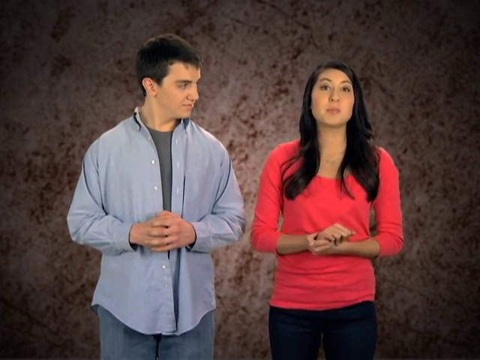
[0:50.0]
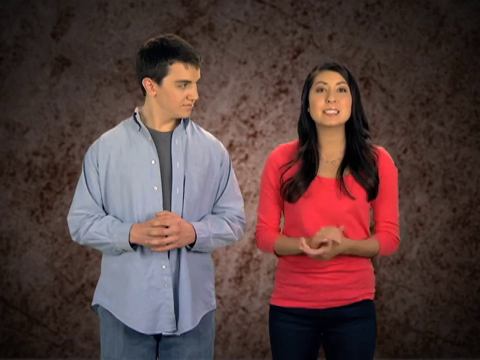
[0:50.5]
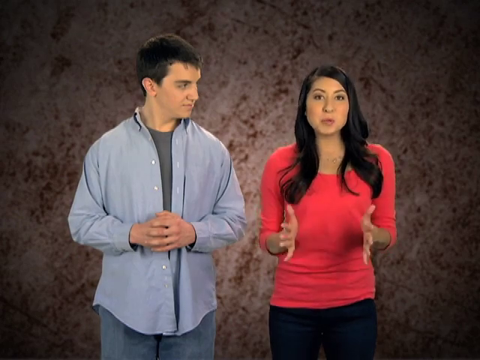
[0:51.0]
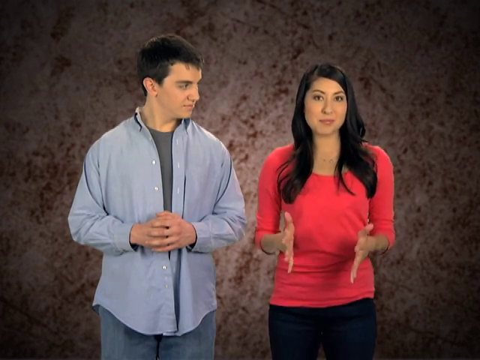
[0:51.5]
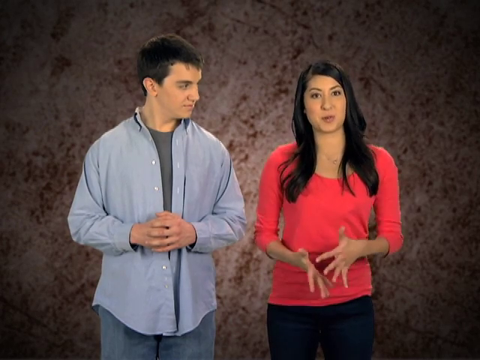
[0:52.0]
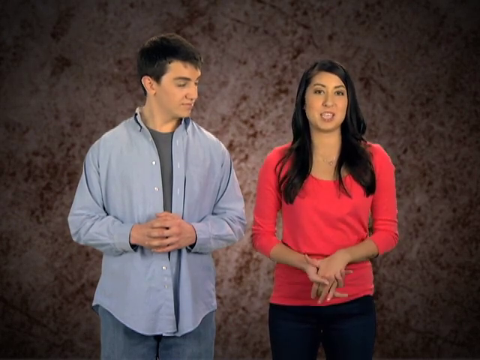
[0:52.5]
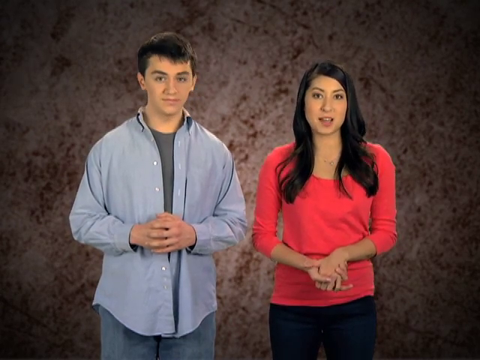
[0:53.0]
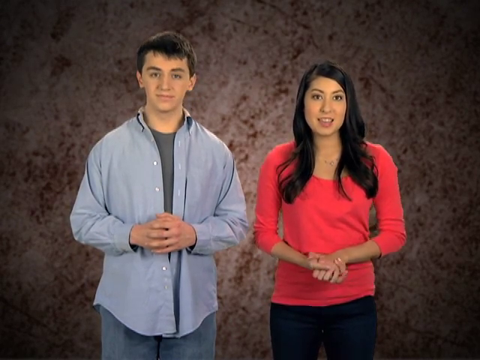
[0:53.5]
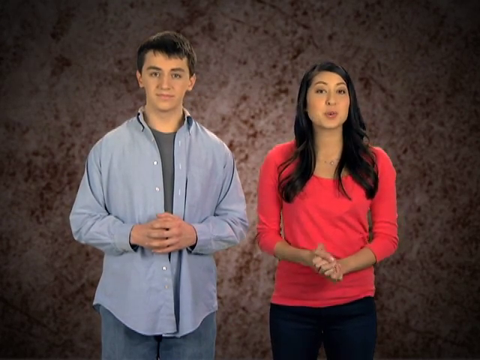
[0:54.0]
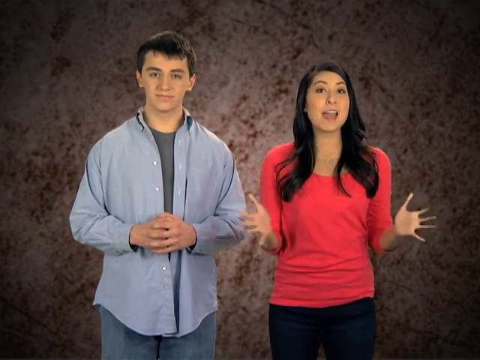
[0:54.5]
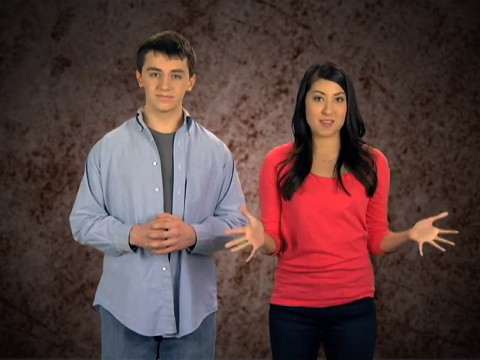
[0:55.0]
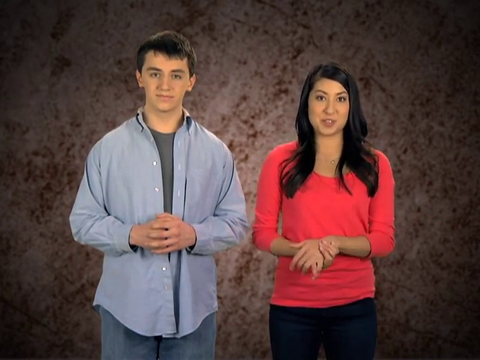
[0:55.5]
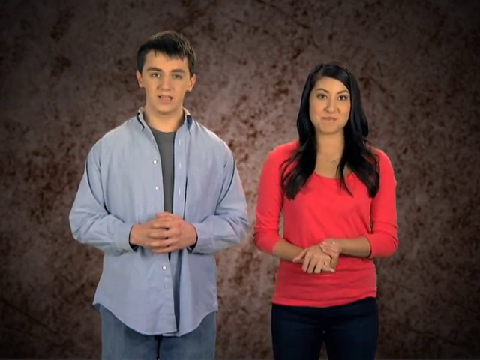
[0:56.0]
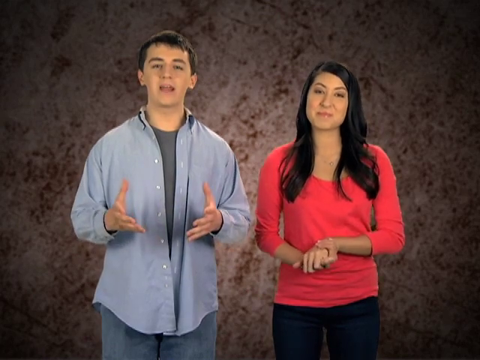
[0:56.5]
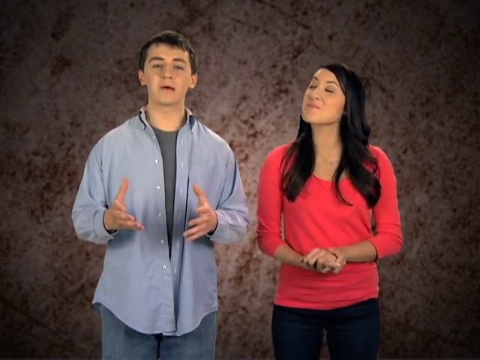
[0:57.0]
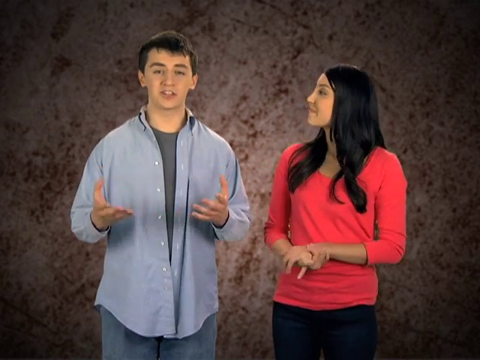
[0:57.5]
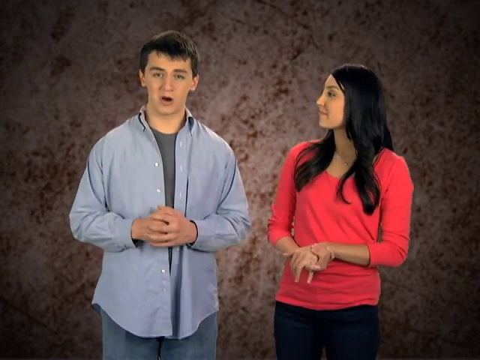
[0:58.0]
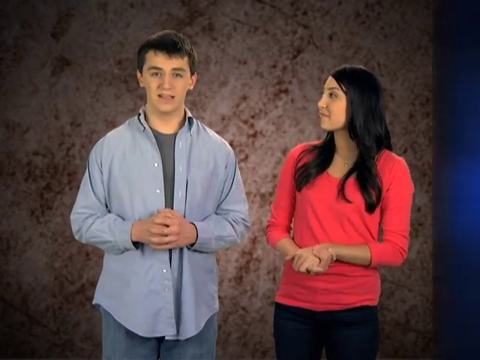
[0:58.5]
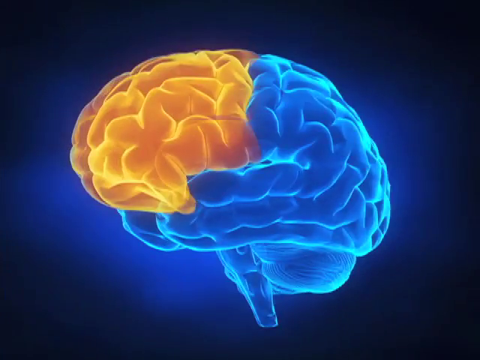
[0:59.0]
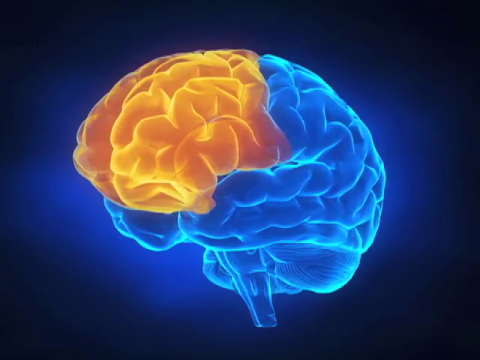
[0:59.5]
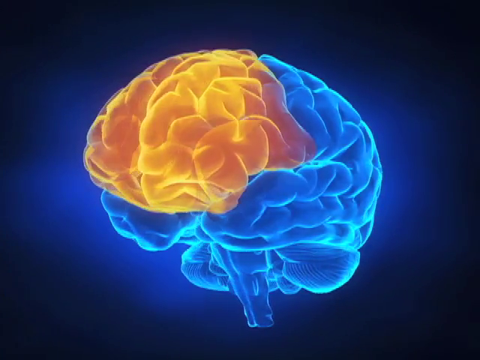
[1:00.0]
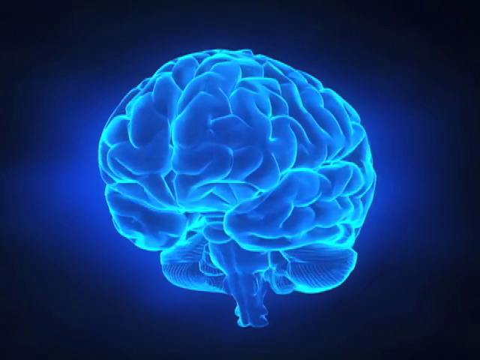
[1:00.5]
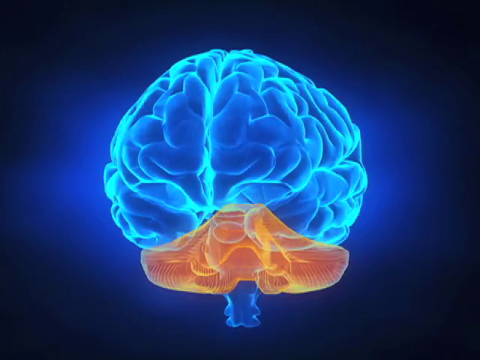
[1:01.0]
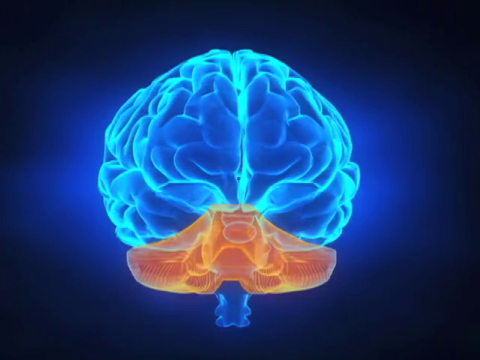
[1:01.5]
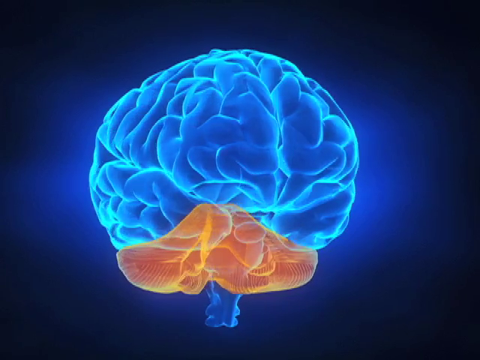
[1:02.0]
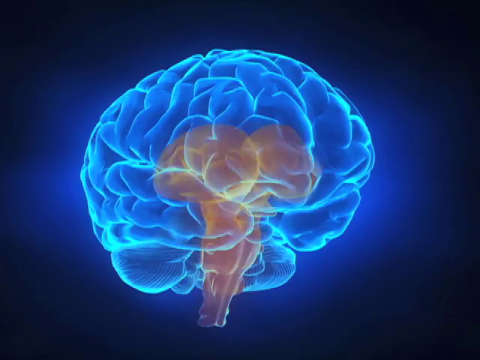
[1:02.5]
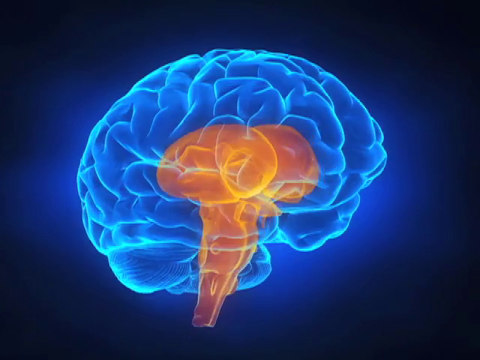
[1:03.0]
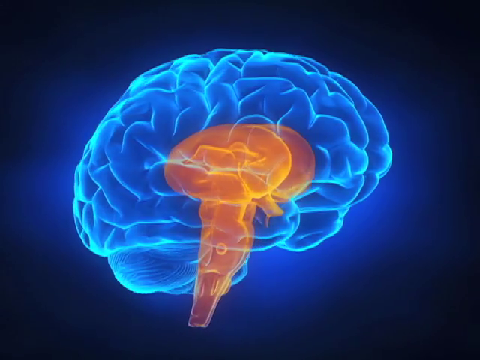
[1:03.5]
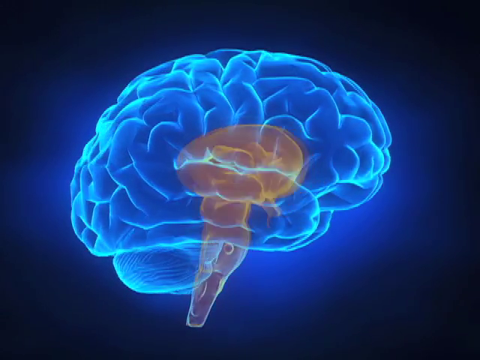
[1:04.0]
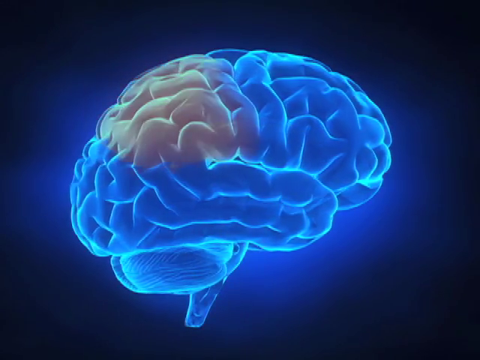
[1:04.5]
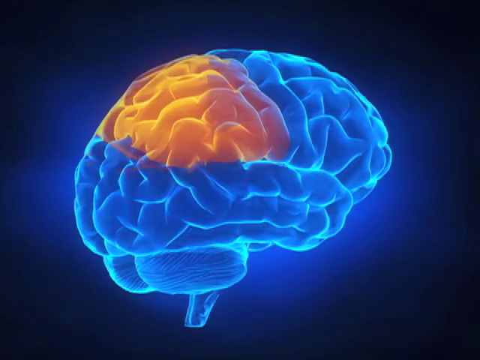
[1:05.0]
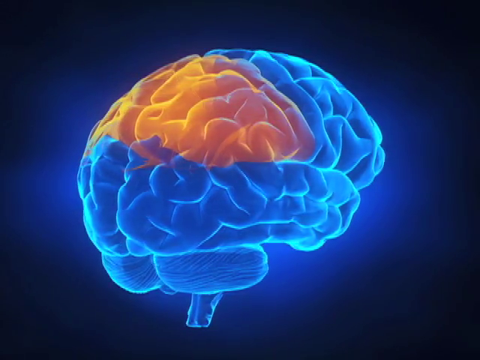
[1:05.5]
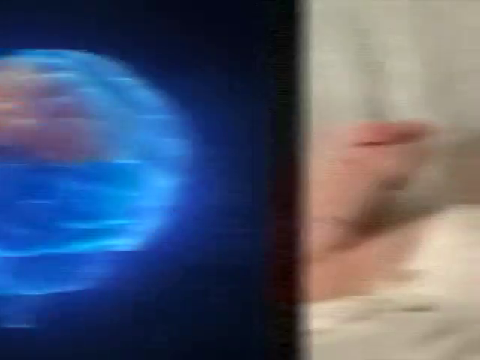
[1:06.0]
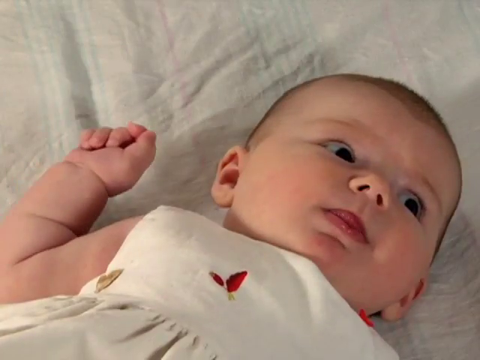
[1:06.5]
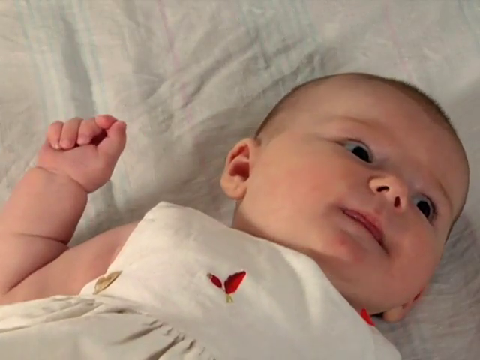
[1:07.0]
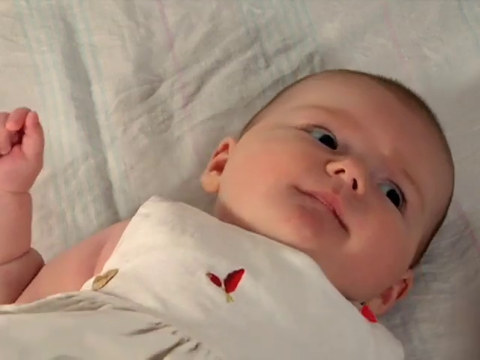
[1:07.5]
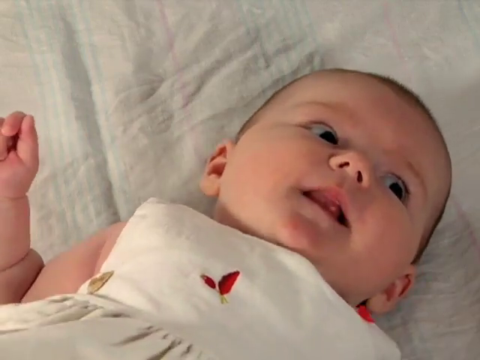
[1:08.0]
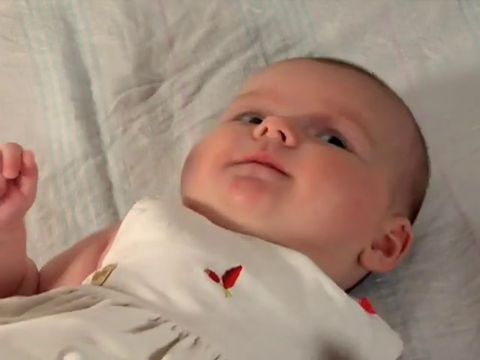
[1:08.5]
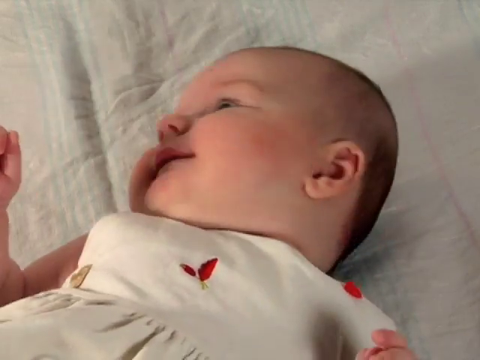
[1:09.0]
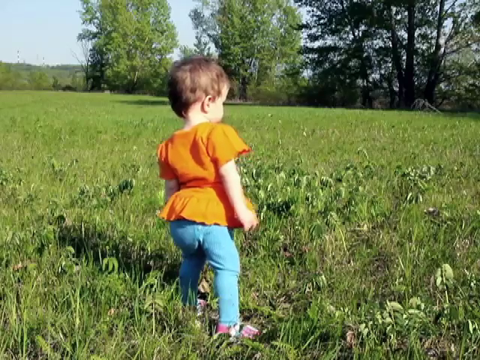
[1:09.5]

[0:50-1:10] A Caucasian couple in their early to mid 20s stand side by side, the man on the left and the woman on the right. She has dark brown-black hair, lightly tan skin and brown eyes, and wears a long-sleeved peach top pushed up to just below the elbows, black pants and a small necklace; her hands are crossed in front of her at the midriff, holding each other. The man wears a dark gray t-shirt under an untucked light blue button-up shirt and blue jeans, and has short dark brown hair and brown eyes; his hands are clasped in front of him in a similar manner. The background behind them is a splotchy, speckled off-white and light brownish red. The woman speaks animatedly, and the man agrees with her as he begins to speak; she turns to him. The view then pans to a translucent image of the brain from the left side, with the front quadrant lit up in yellow, then to the underside of the brainstem lit up in orange-yellow, and then different regions of the brain light up as orange pockets.